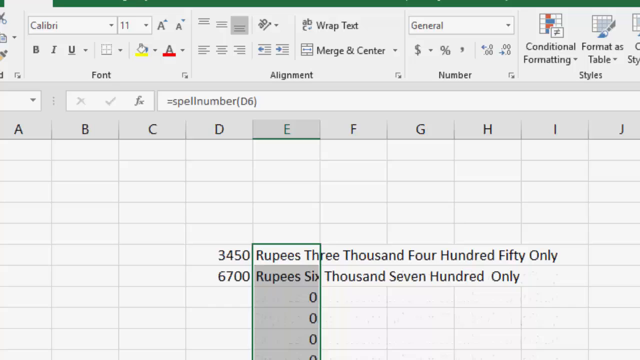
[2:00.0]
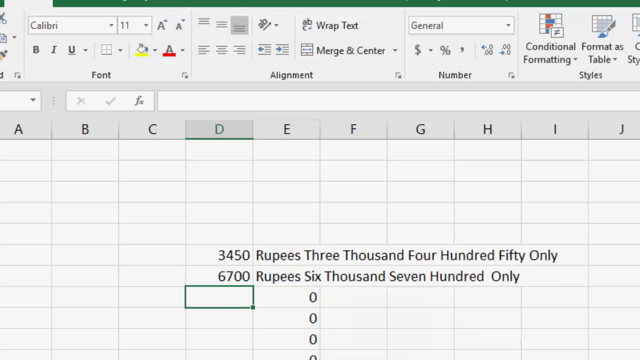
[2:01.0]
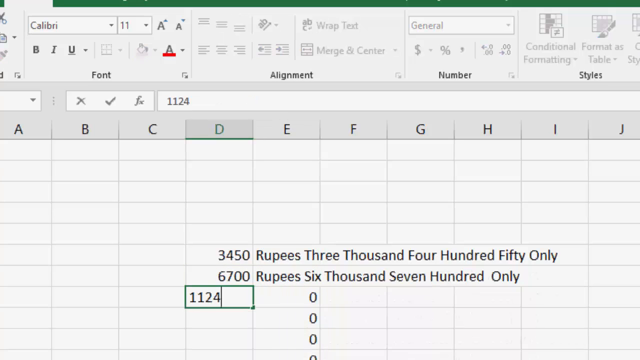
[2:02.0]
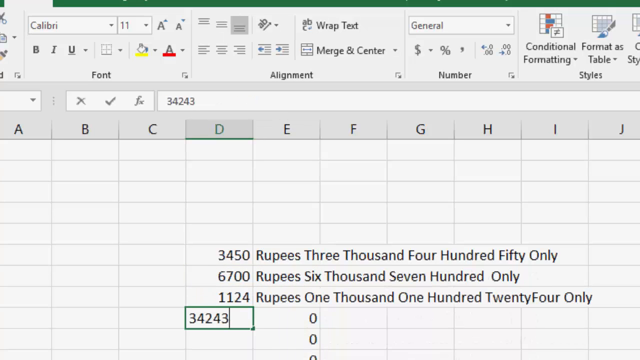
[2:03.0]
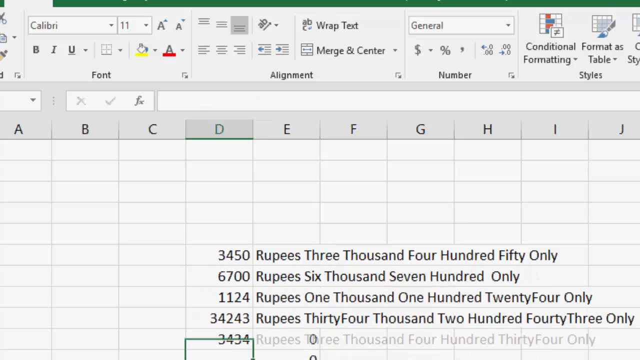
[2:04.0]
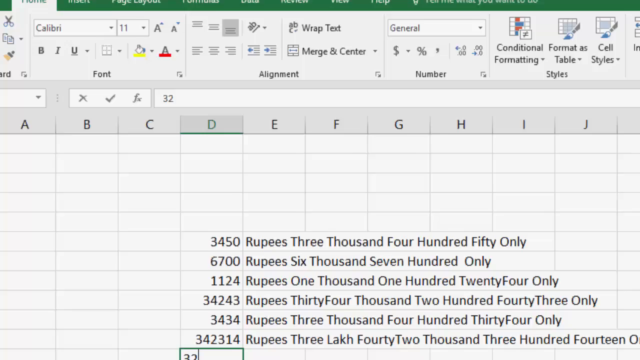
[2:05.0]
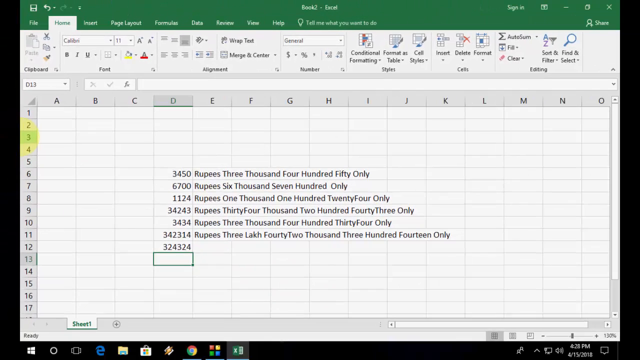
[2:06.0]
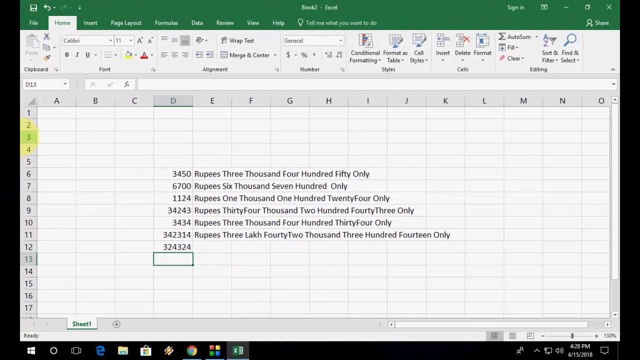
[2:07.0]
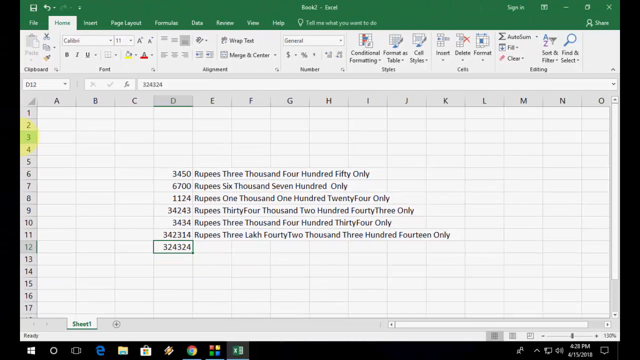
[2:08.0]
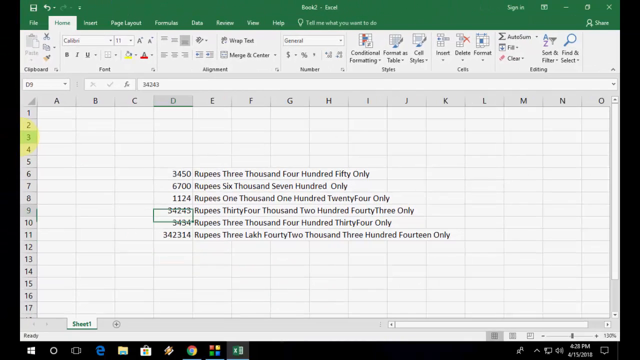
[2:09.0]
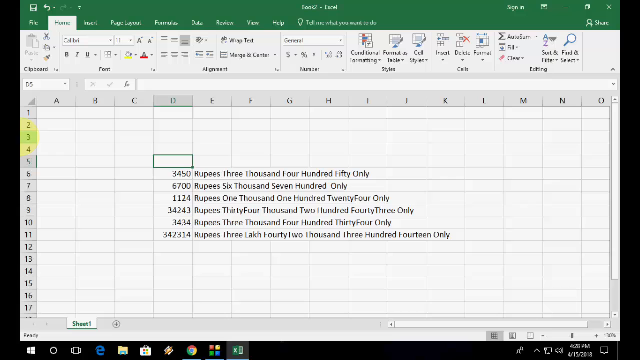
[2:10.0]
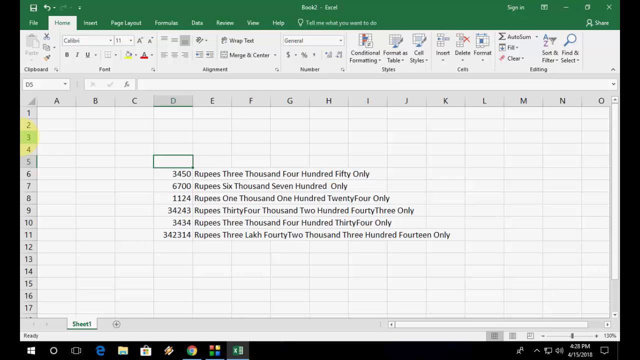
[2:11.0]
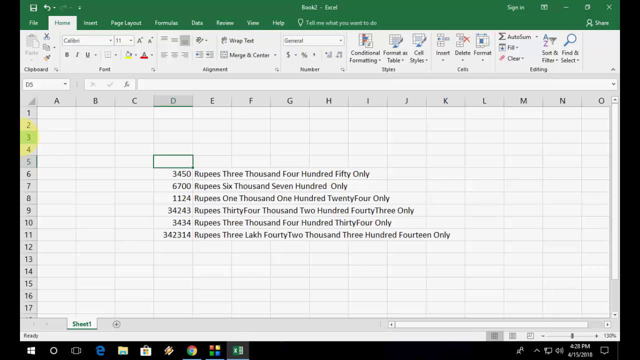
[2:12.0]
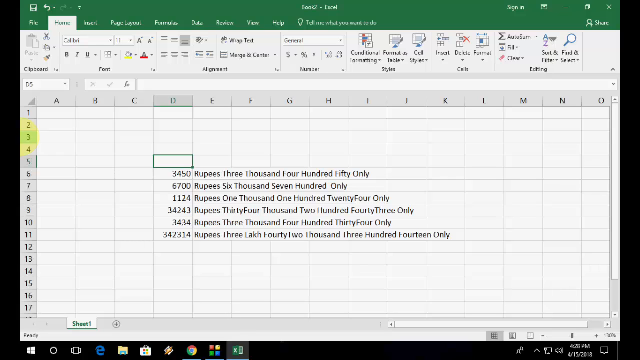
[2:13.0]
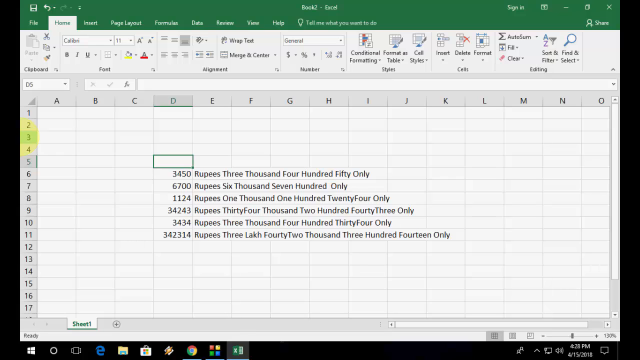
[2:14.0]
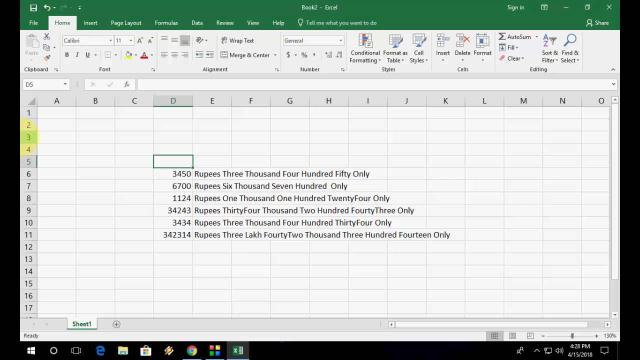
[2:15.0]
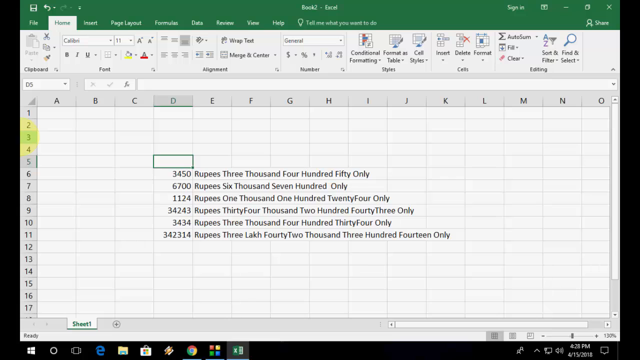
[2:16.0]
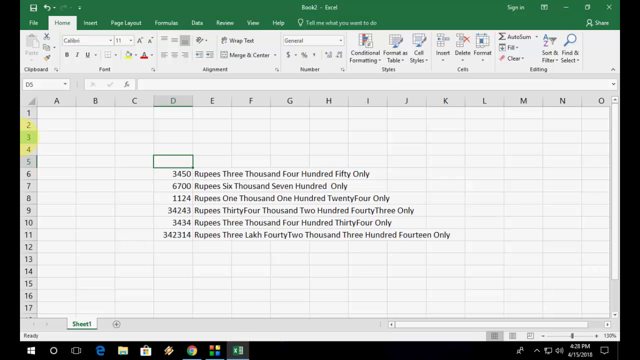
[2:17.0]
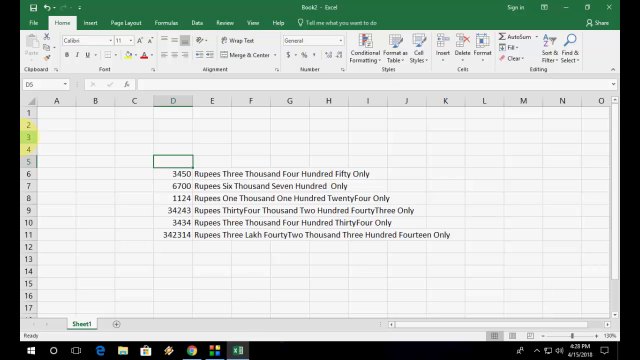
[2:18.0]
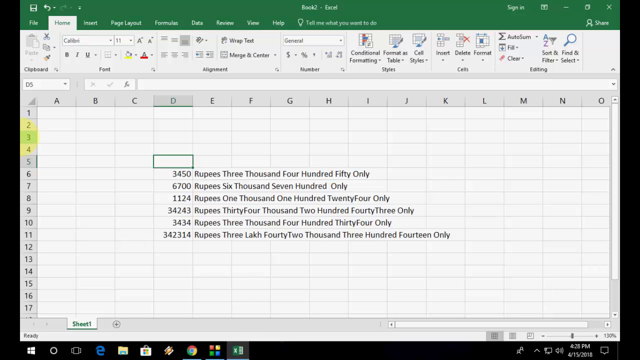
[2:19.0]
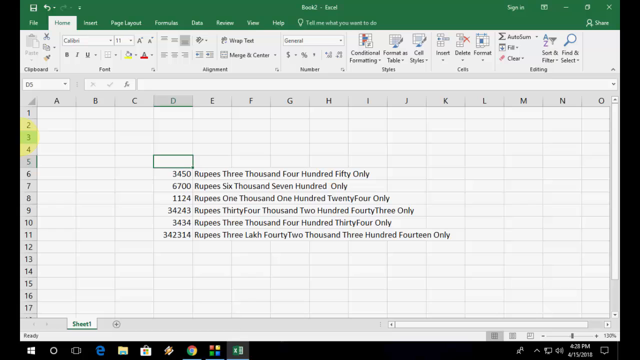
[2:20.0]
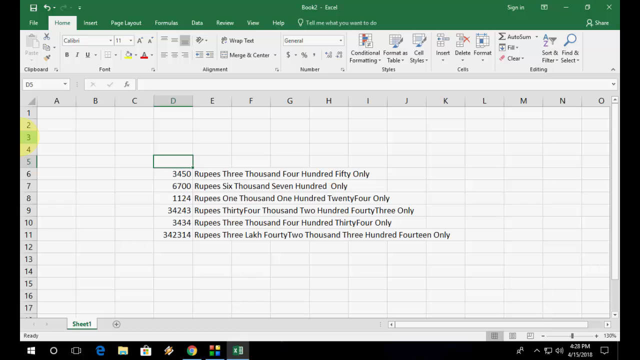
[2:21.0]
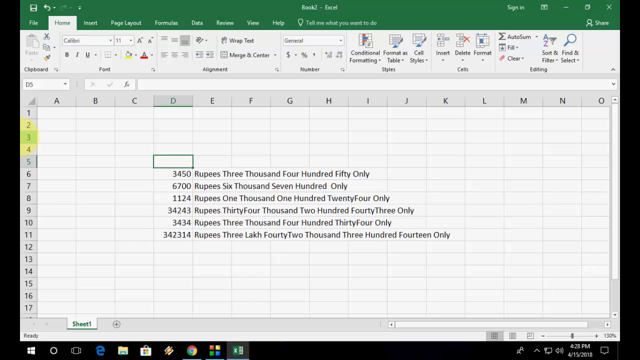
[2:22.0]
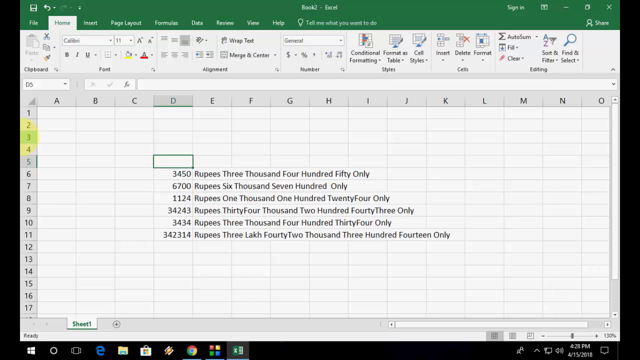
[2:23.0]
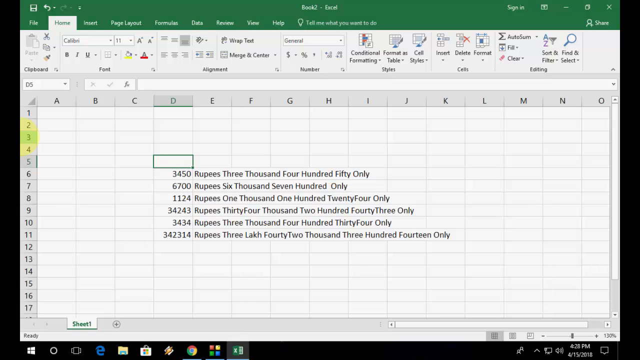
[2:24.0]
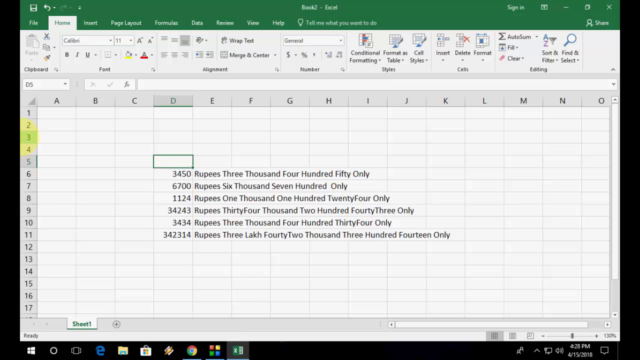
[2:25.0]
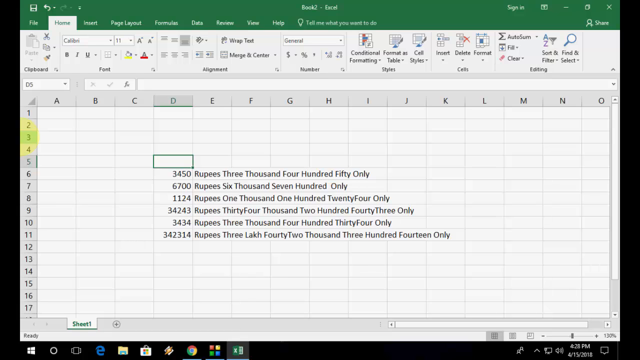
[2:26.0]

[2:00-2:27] In the row below, the text reads "rupees 6,700 only". The 6,700 cell is clicked, then the cell below it, and 1124 is typed. To the right, the text automatically changes, following the same pattern as the previous two, starting with rupees but with the number value changed. The fourth cell is 34,243, and its number follows correctly after rupees. Then 3,434 is typed, and the cursor clicks upward on each cell, up to above the first value, 3,450.